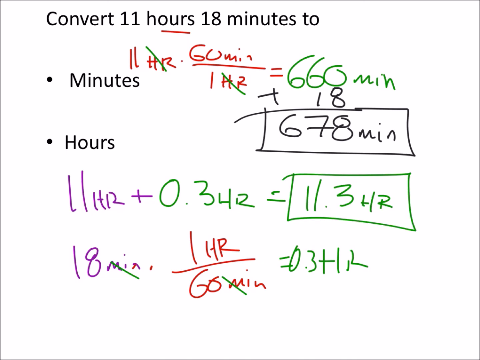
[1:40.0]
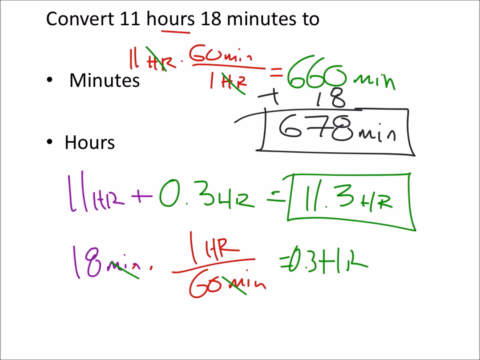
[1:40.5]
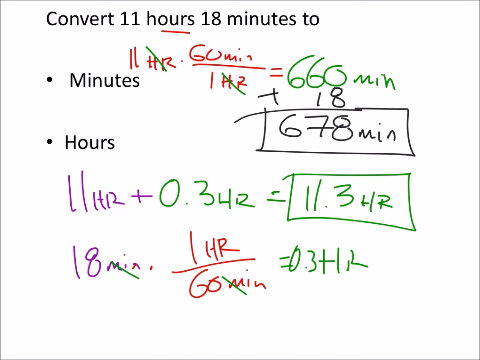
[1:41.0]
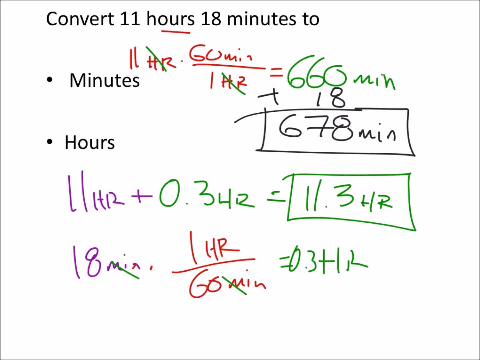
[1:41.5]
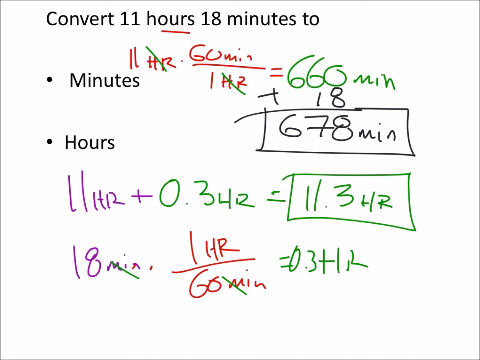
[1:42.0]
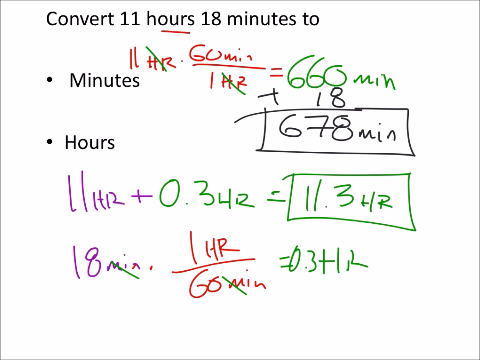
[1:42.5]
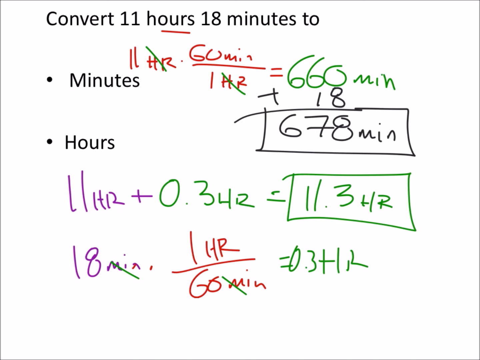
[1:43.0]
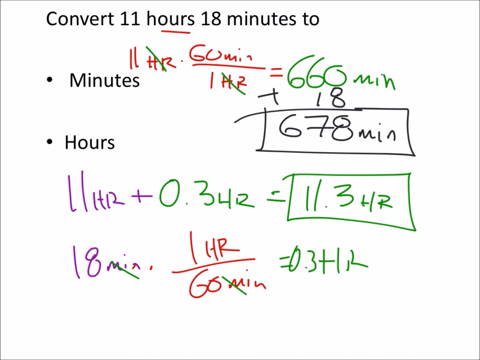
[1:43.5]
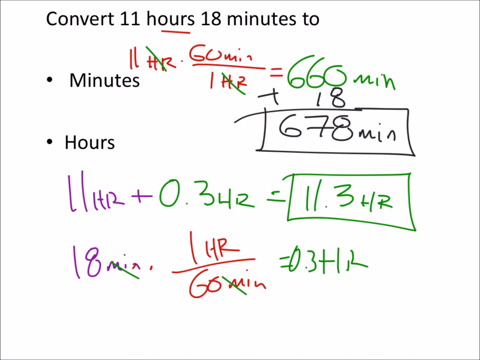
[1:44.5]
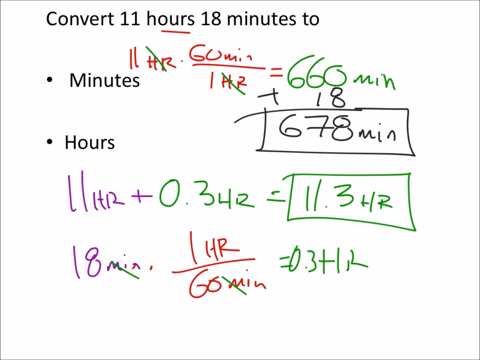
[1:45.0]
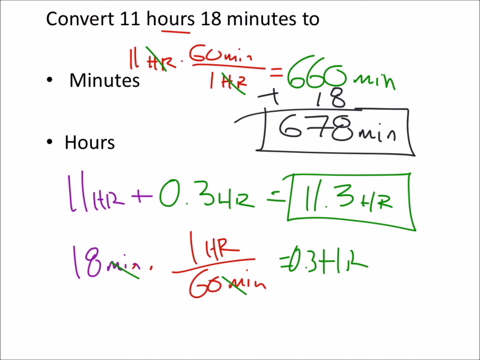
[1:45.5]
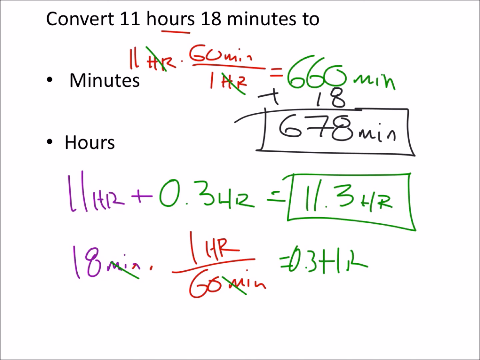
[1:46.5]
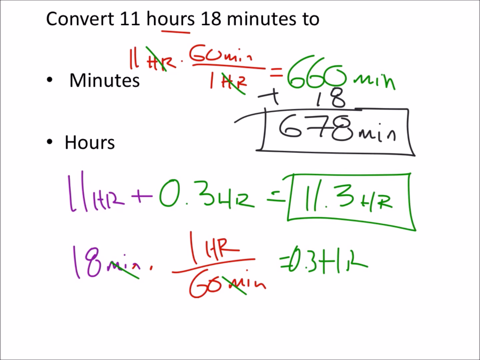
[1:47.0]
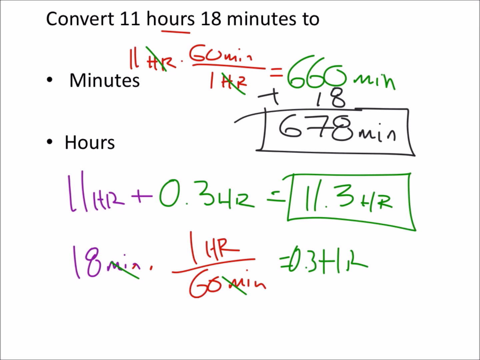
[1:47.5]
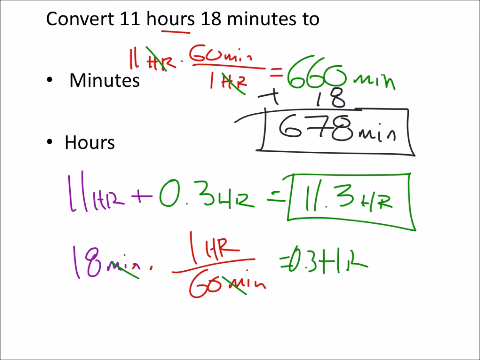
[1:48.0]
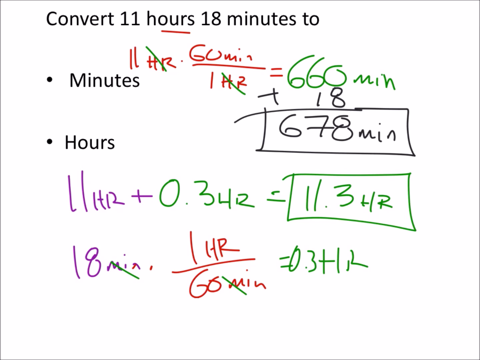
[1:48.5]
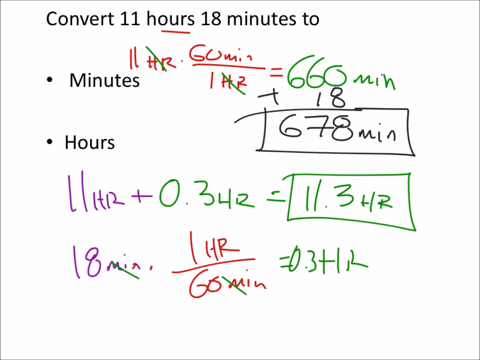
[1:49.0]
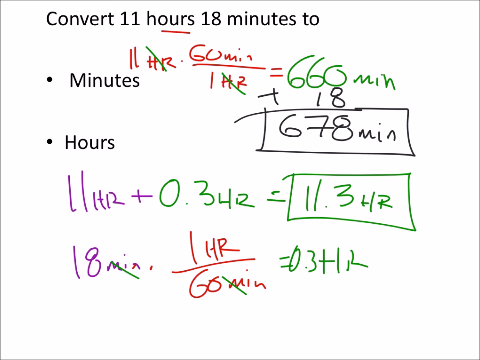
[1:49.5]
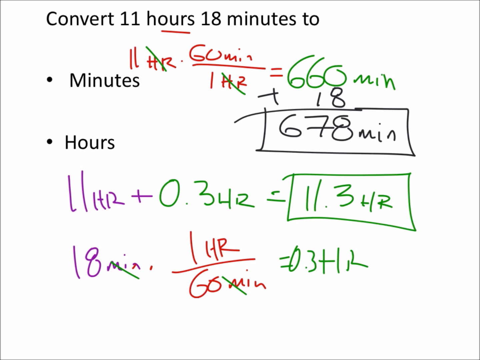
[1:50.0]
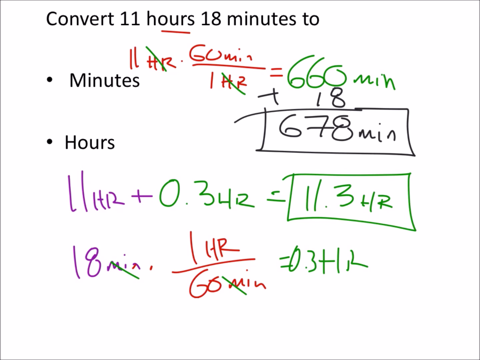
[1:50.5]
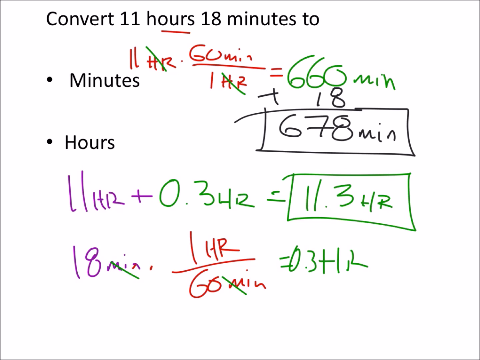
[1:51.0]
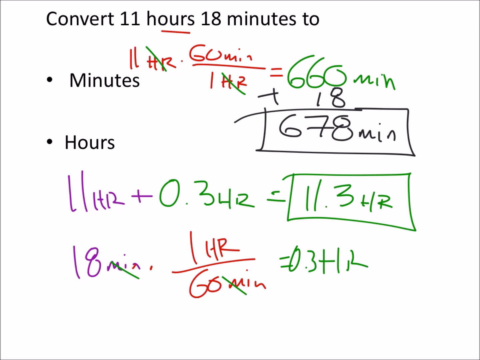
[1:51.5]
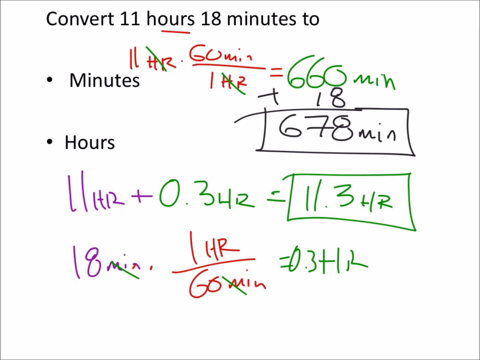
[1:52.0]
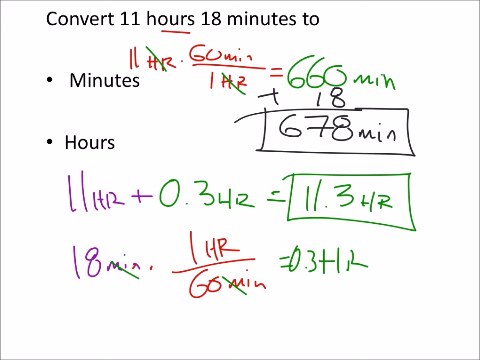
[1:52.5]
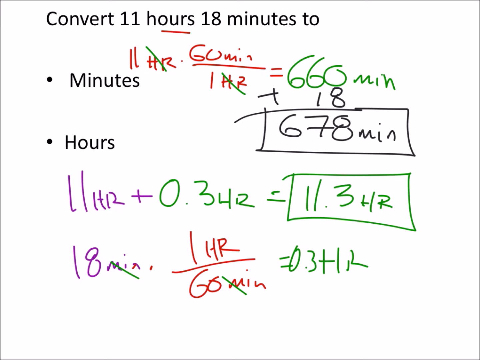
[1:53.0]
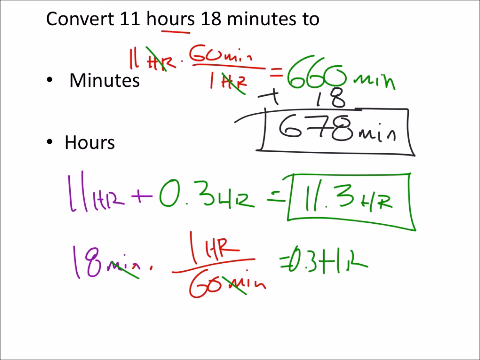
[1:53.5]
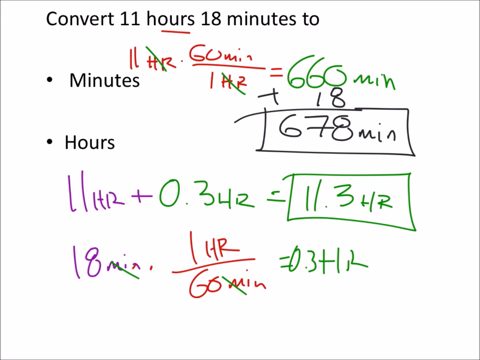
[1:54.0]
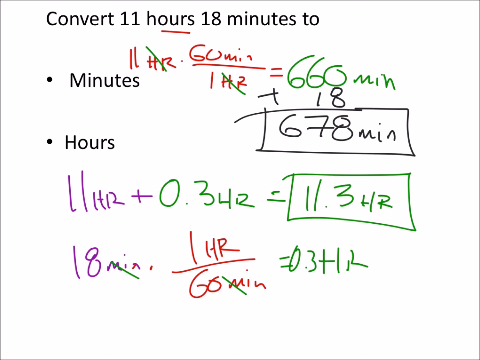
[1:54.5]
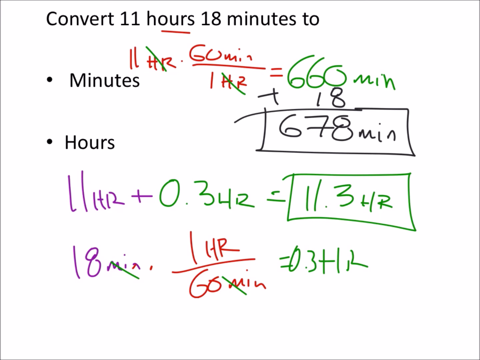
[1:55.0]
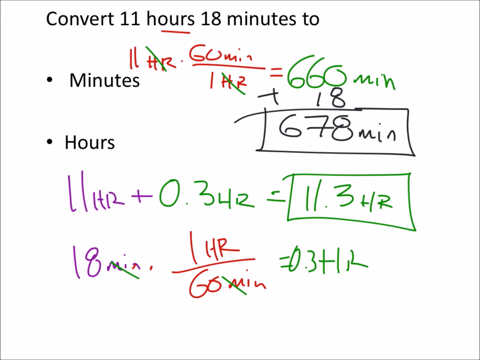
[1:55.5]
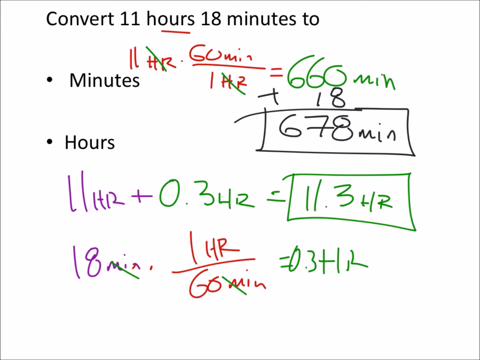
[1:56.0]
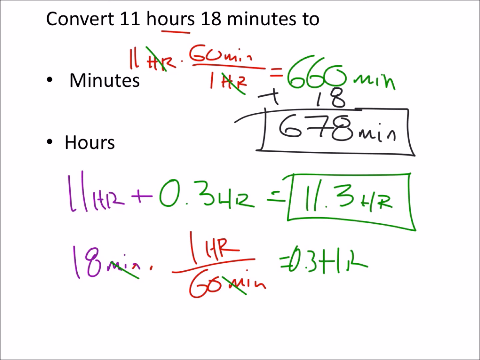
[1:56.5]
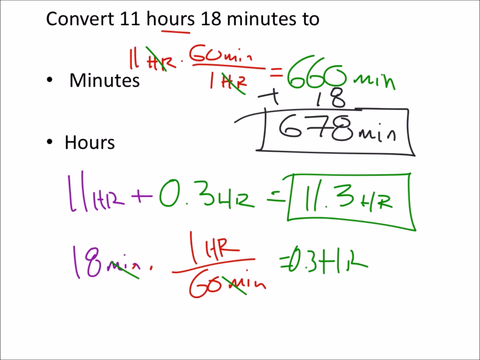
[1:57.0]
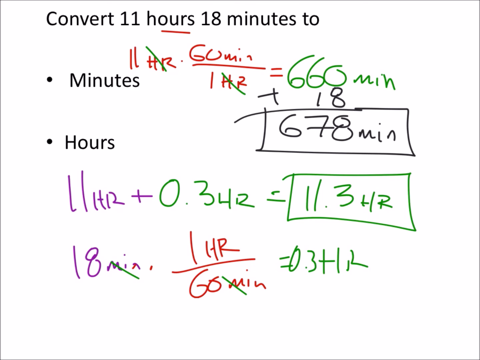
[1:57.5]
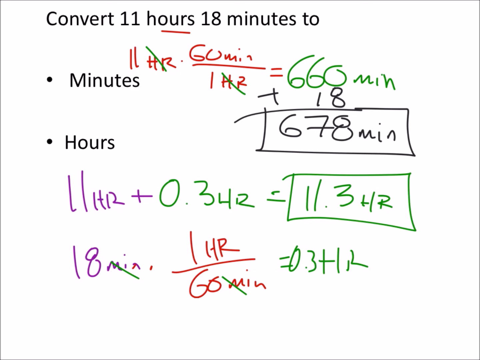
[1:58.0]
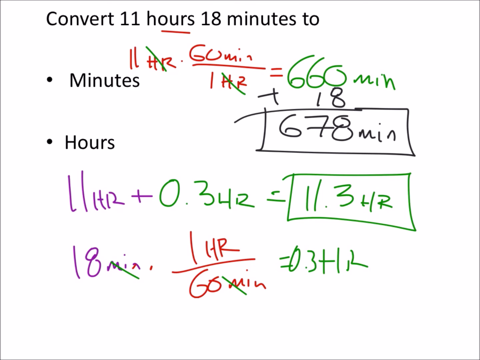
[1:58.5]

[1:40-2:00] A screen with a white background shows black text at the top reading "convert 11 hours 18 minutes to", with a "minutes" bullet point and an "hours" bullet point underneath. Next to the minutes bullet point is an equation reading "11 HR times 60 min divided by 1 HR equals 660 min", all in brown marker except the final "660 min", which is in green marker. The "HR" labels have a green dash line through them. Under "660 min", black marker reads "plus 18", with a horizontal equal line underneath and then "678 min", which has a box drawn around it. Under the hours bullet point, purple marker reads "11 HR plus", followed in green marker by "0.3 HR equals 11.3 HR", with a box drawn around "11.3 HR". Below that, purple marker reads "18 min", then brown marker reads "times 1 HR divided", then green marker reads "equals 0.3 HR". The "min" labels next to 18 and 60 have a green dash line through them.